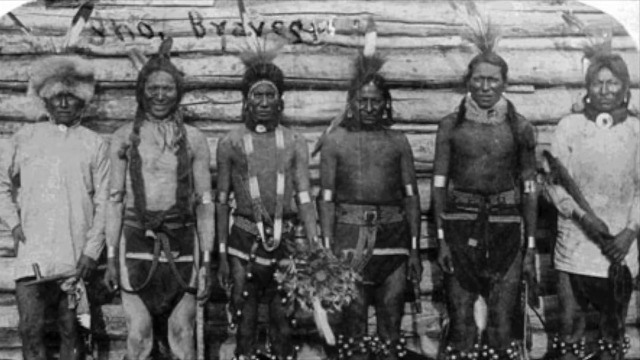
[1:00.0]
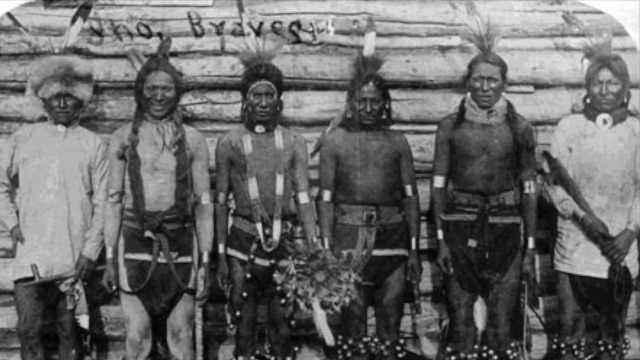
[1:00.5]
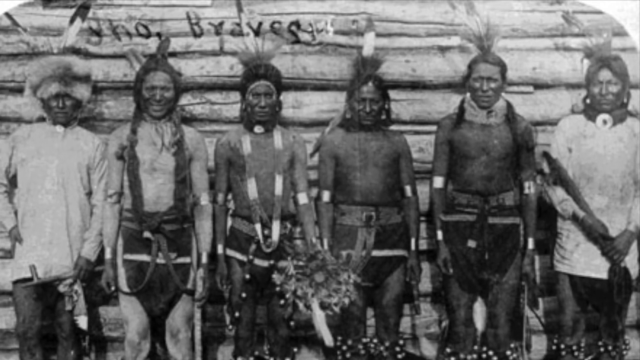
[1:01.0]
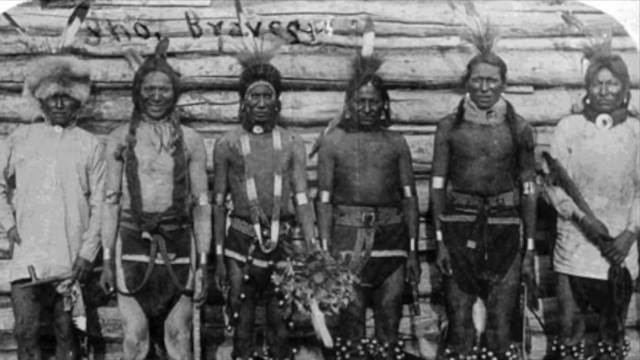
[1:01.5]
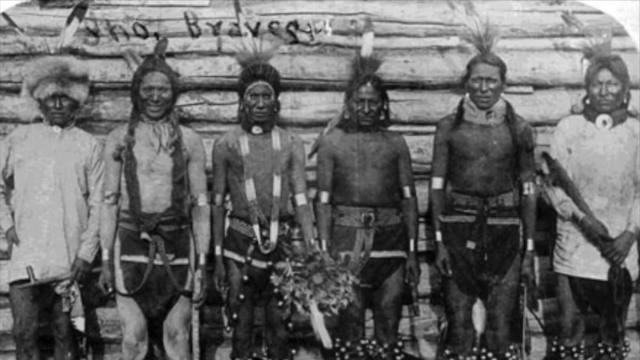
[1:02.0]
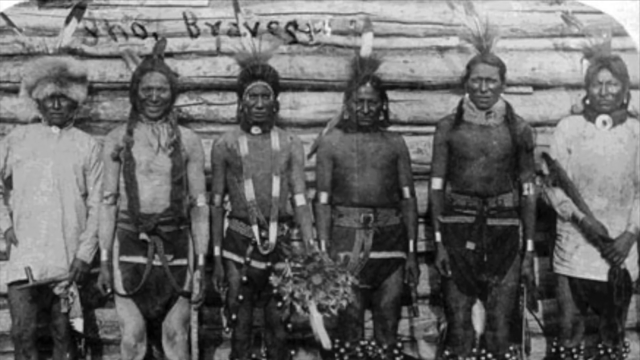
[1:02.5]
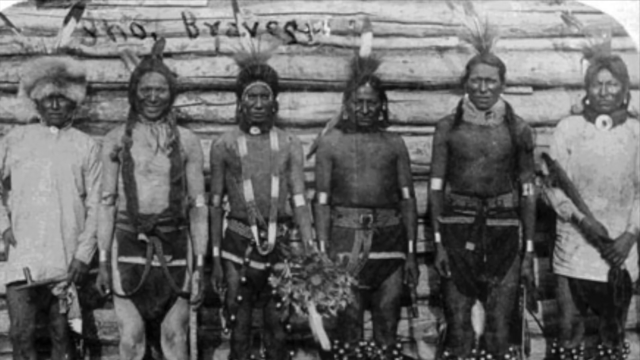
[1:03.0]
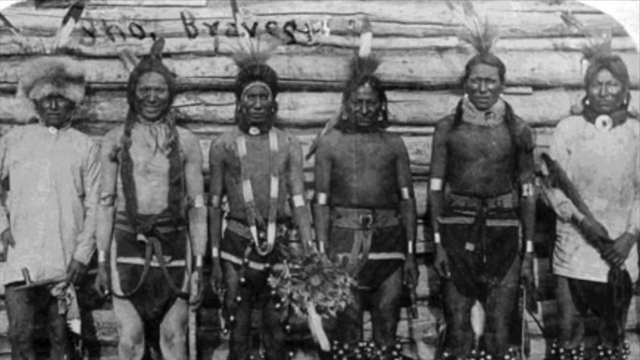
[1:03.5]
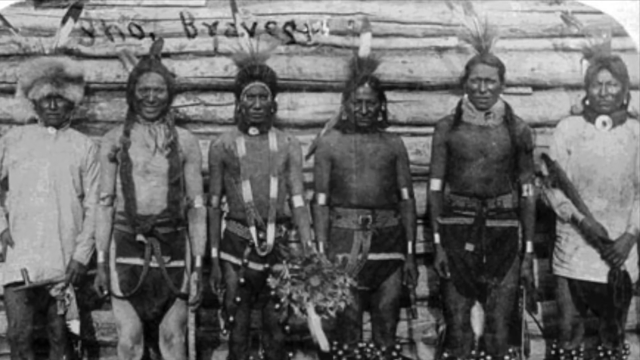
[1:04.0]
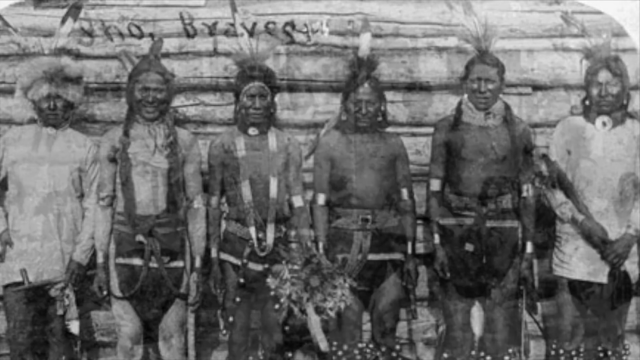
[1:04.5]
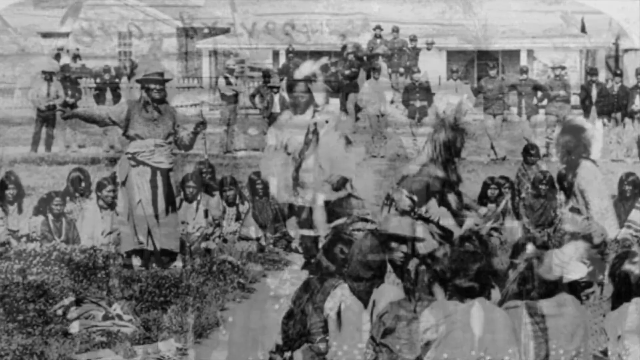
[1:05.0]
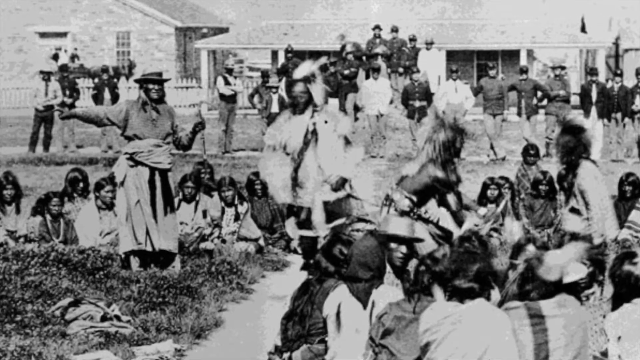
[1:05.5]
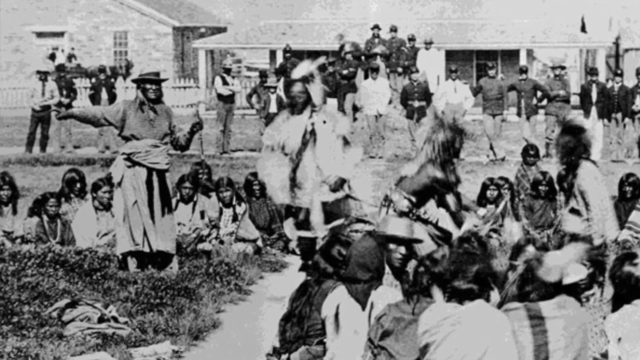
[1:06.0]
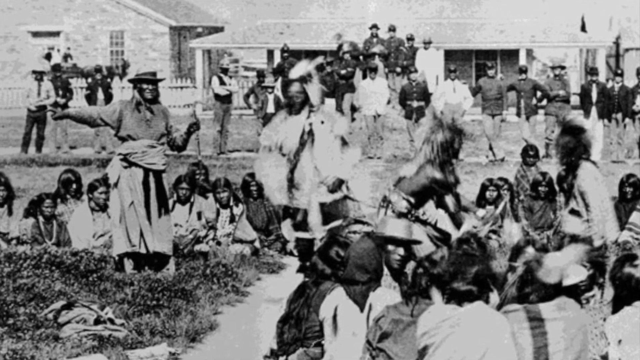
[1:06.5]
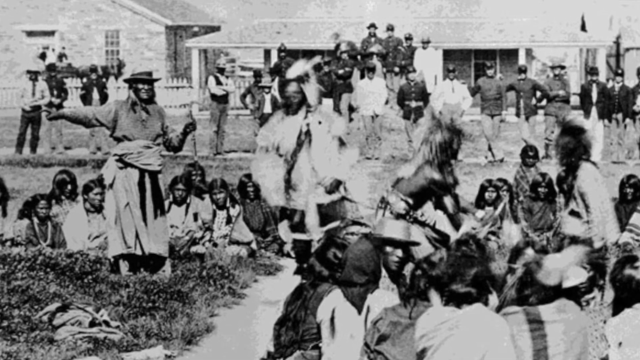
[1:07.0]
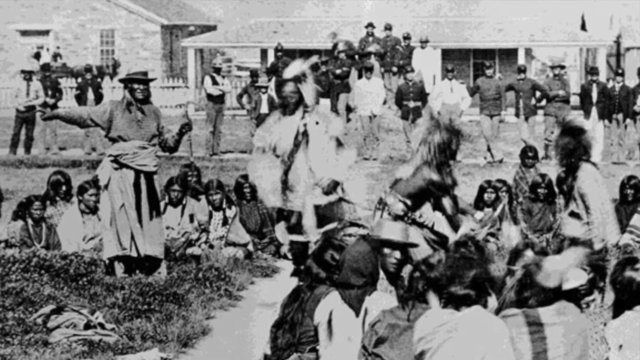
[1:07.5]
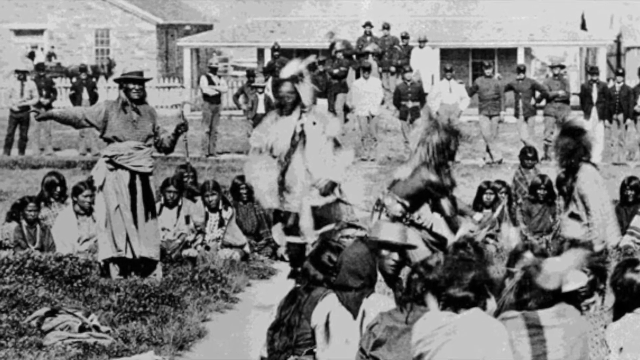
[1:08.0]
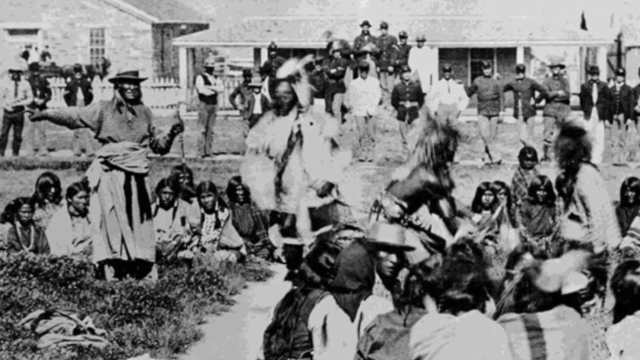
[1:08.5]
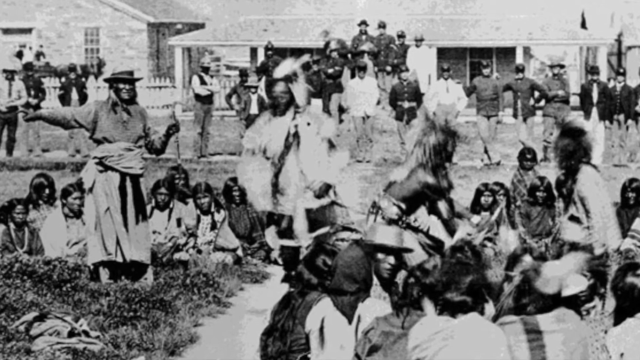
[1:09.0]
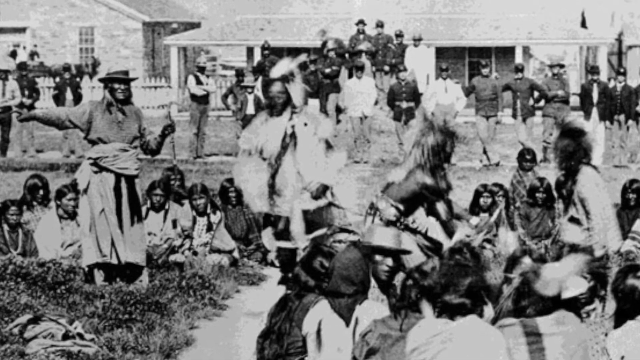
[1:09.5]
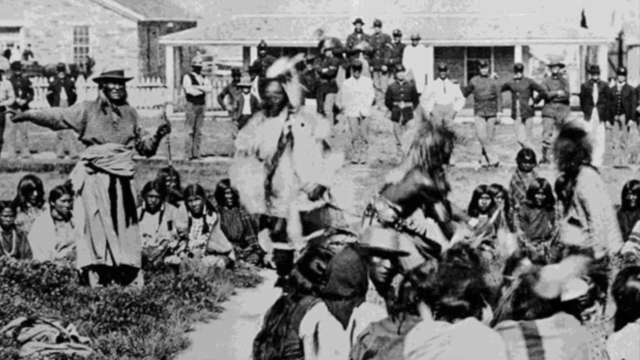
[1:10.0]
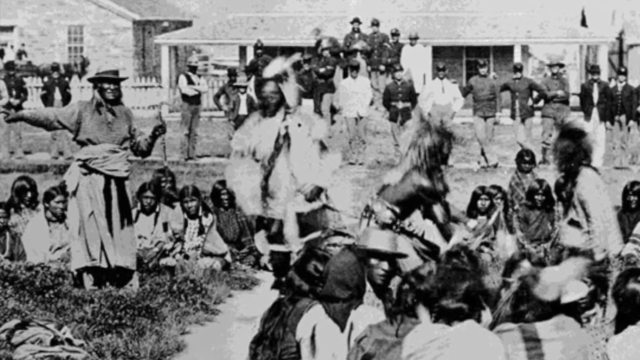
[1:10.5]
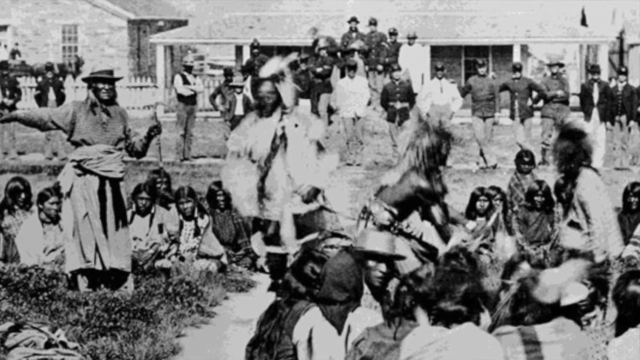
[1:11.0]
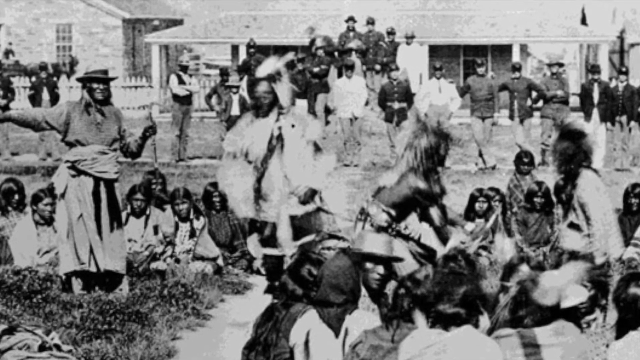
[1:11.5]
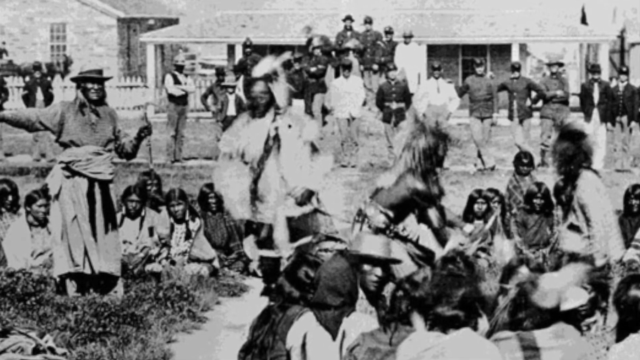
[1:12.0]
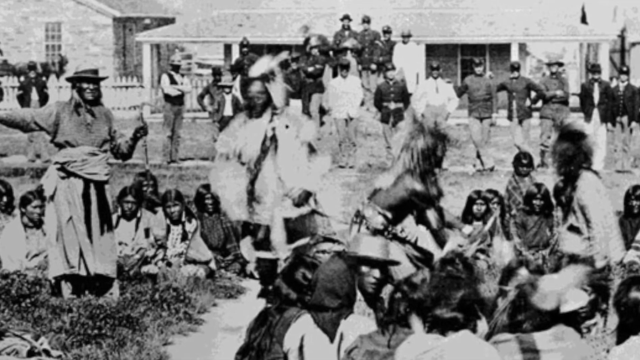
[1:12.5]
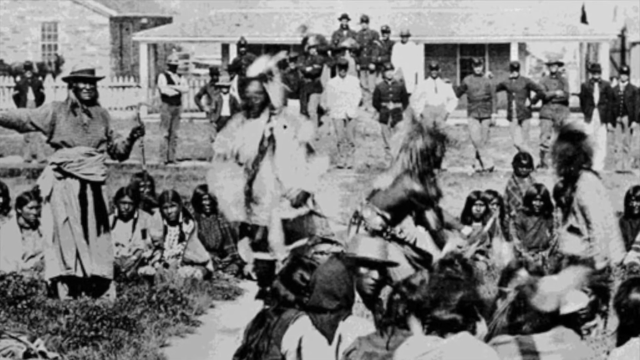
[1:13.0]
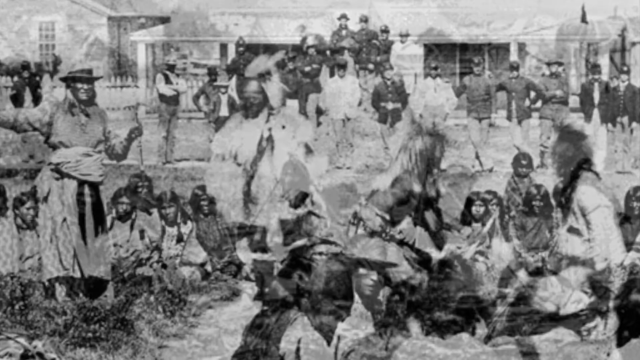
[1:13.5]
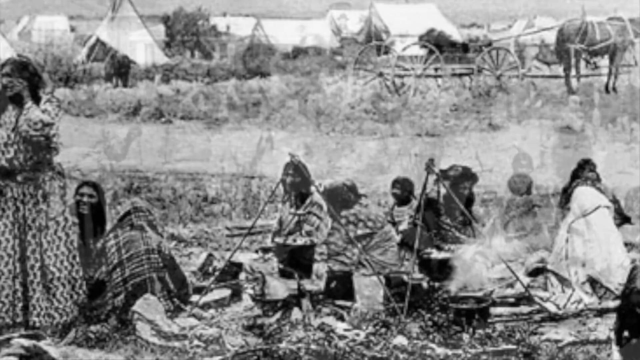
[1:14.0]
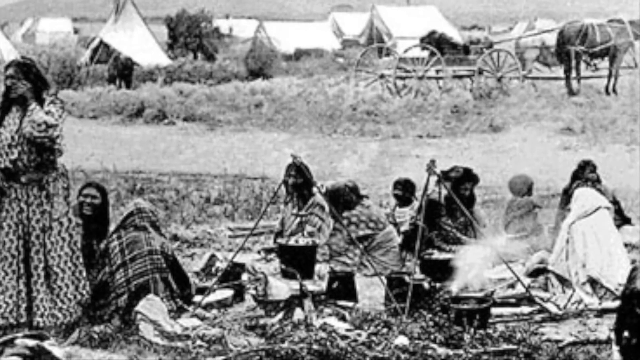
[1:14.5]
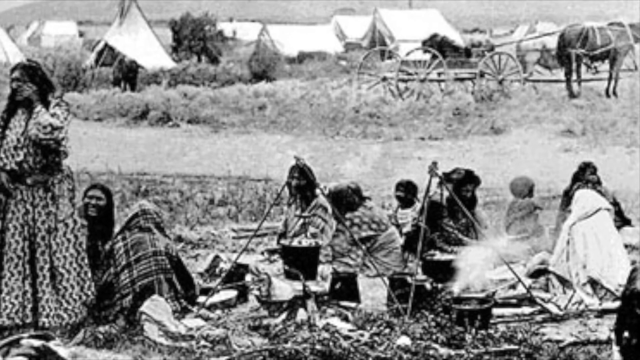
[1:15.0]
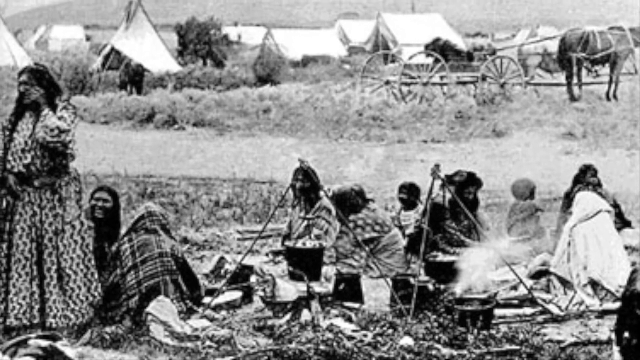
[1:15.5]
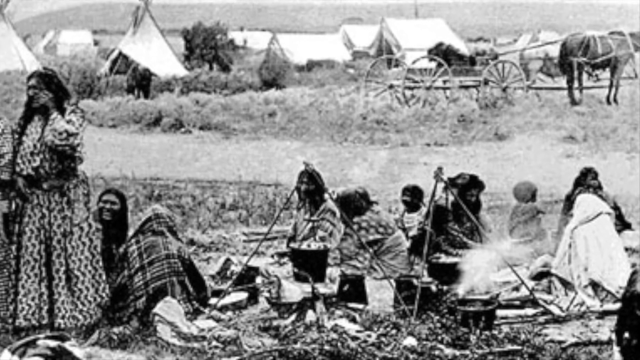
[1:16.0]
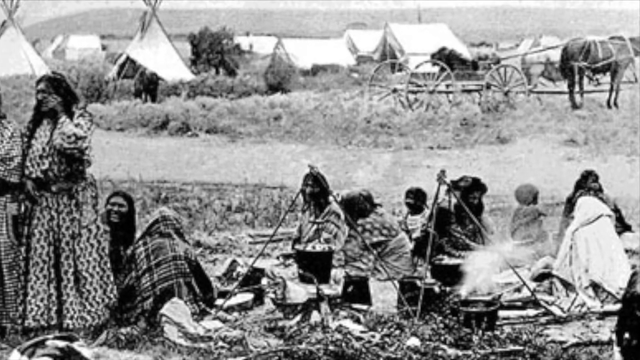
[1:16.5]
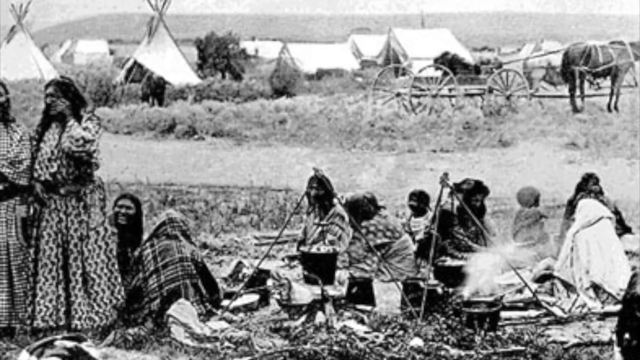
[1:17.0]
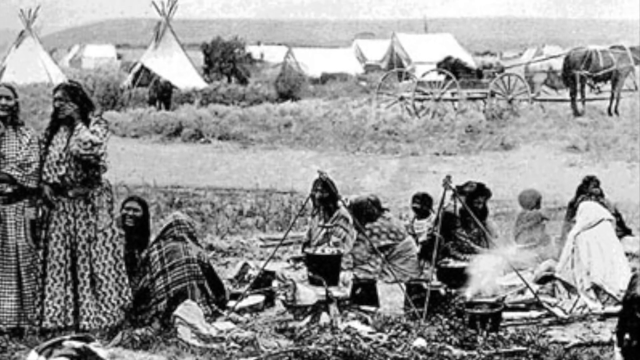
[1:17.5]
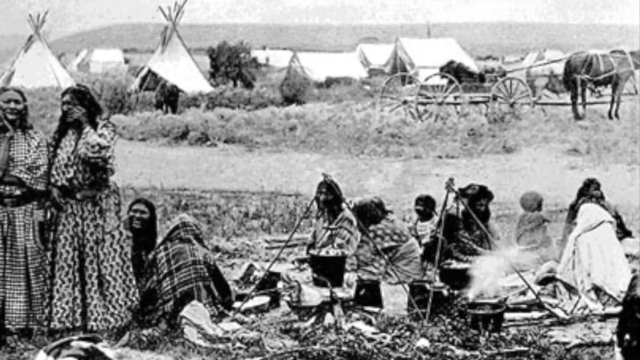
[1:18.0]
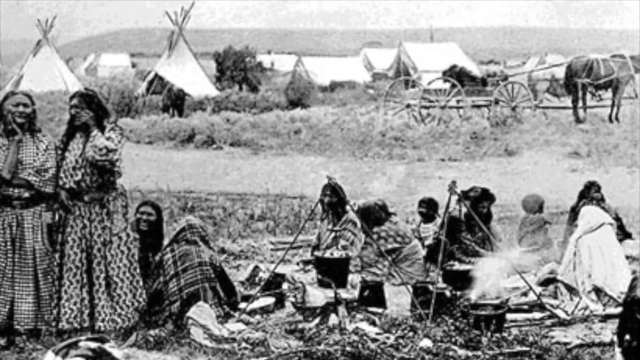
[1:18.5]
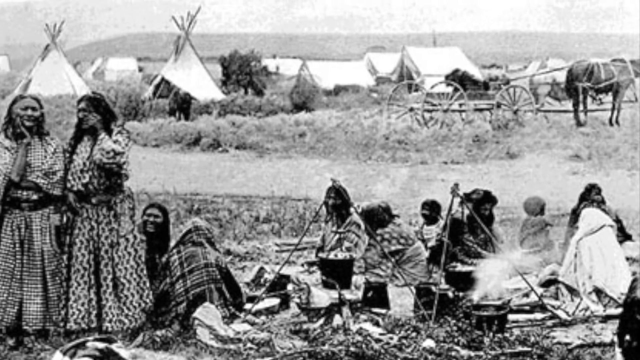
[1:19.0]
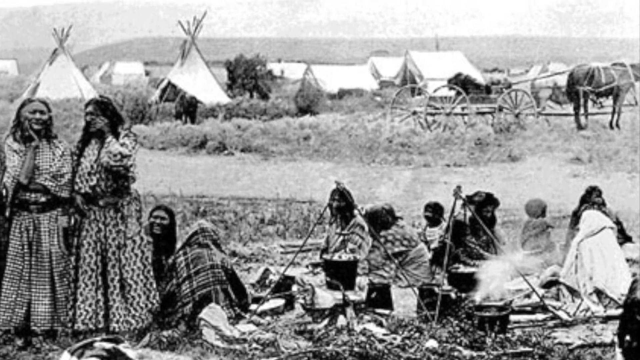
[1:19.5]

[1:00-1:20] A group of Indian Braves appears to be standing outside a log building, with the log wall visible behind them. The video transitions to a group of Indians outside what appears to be a military installation or some type of neighborhood within a city. White people in the background look like they are dressed in infantry clothes. In the foreground are the Indians, some sitting on the ground and others standing; they could be putting on some type of performance in the middle of this town square area while the soldiers watch. The next image shows Indians living out on the plains, with a group of women next to campfires, apparently making food. In the background there are tepees set up, and beyond the tepees are tents that look like the type used by the military in the 1800s or even the 1700s.